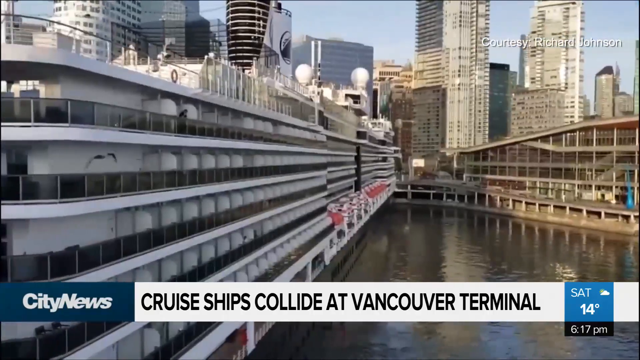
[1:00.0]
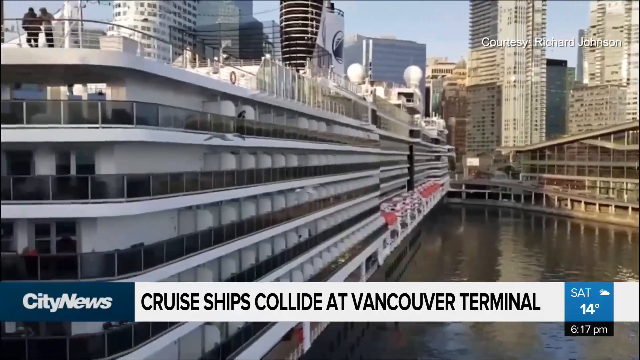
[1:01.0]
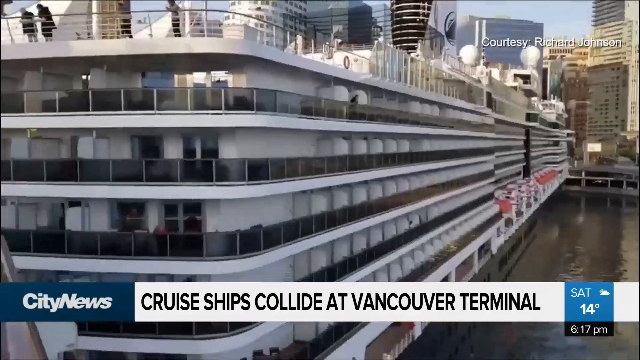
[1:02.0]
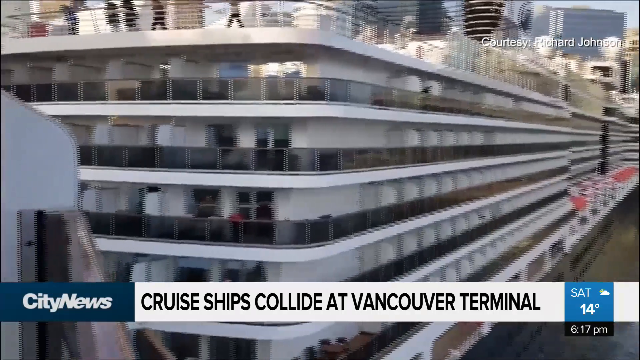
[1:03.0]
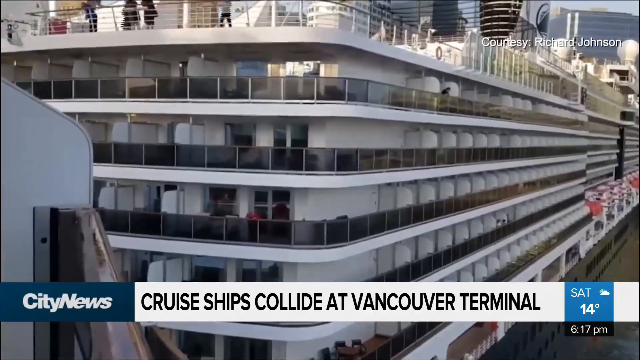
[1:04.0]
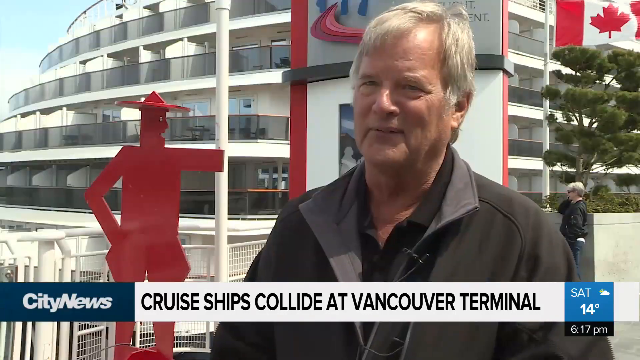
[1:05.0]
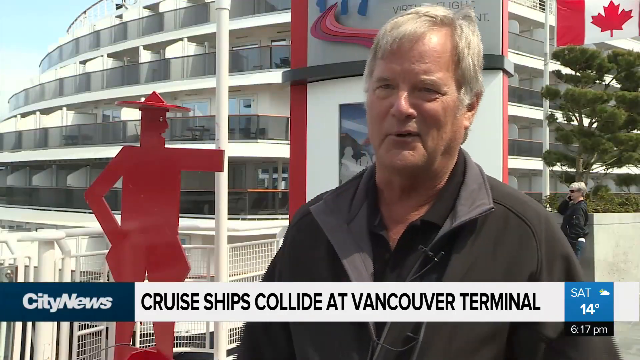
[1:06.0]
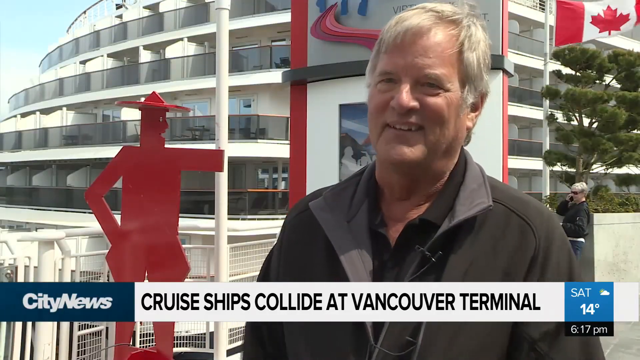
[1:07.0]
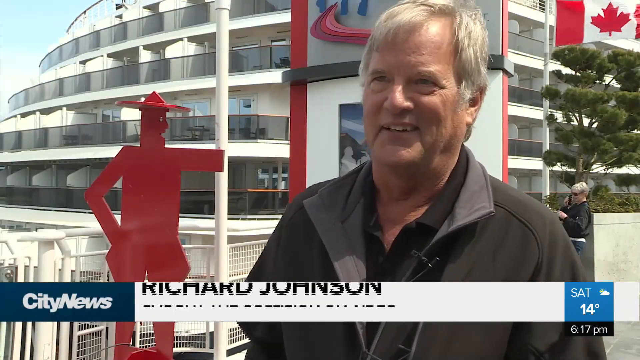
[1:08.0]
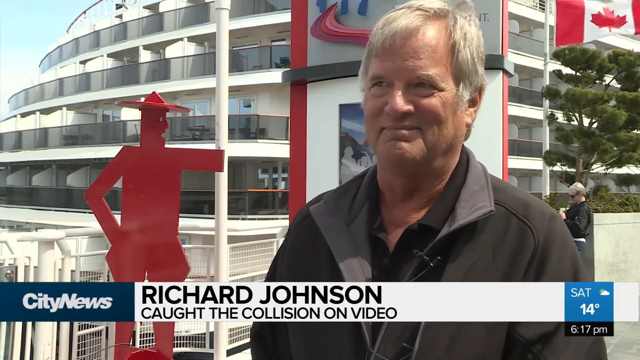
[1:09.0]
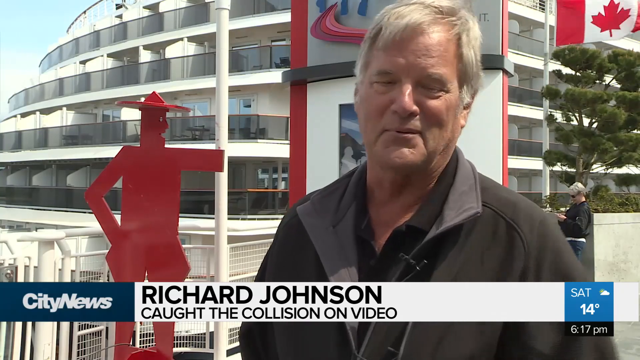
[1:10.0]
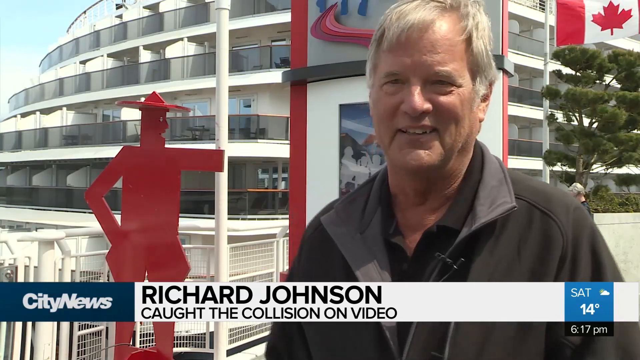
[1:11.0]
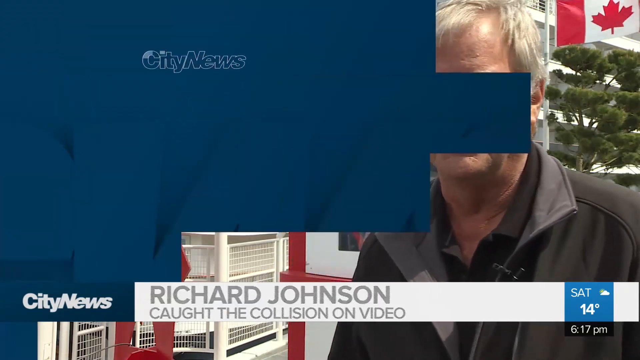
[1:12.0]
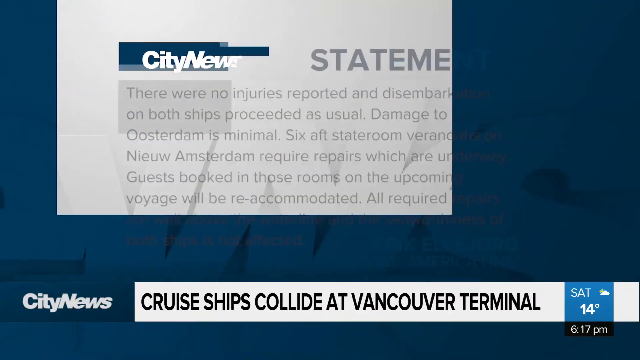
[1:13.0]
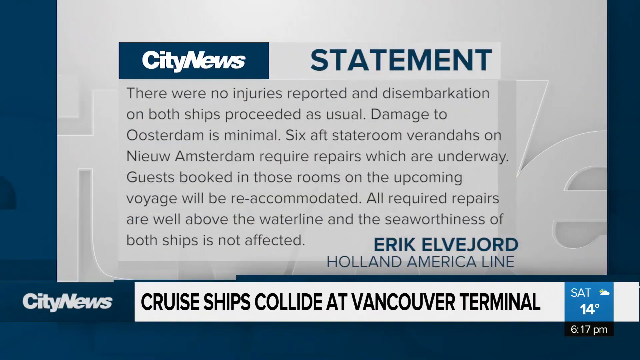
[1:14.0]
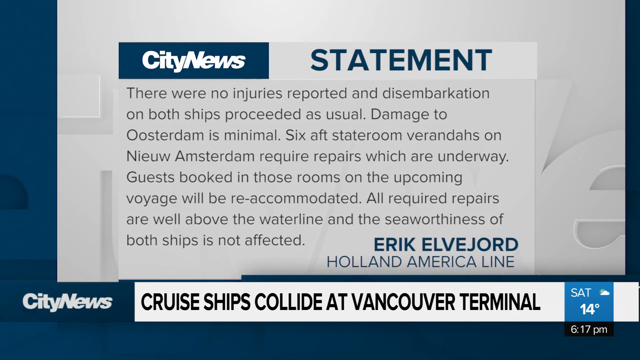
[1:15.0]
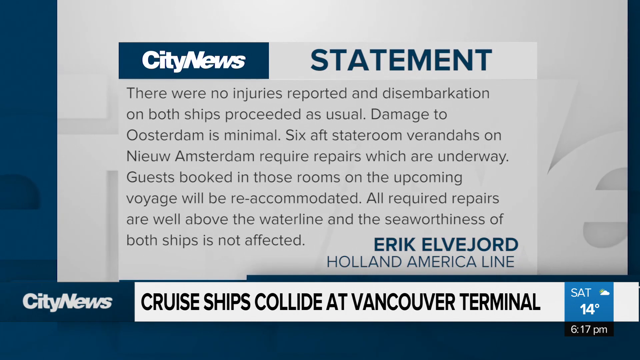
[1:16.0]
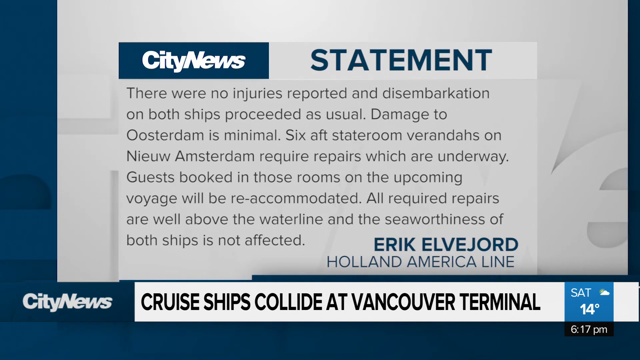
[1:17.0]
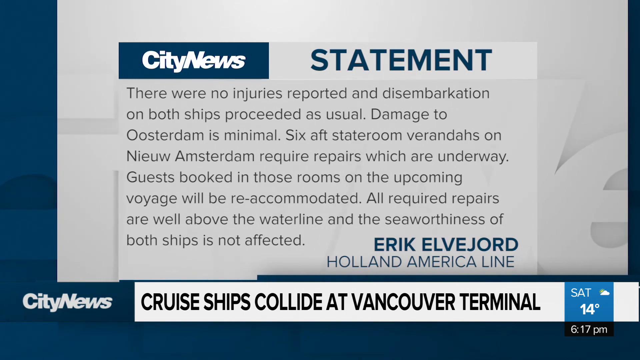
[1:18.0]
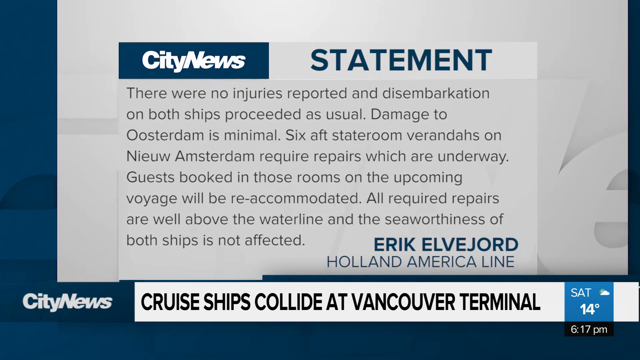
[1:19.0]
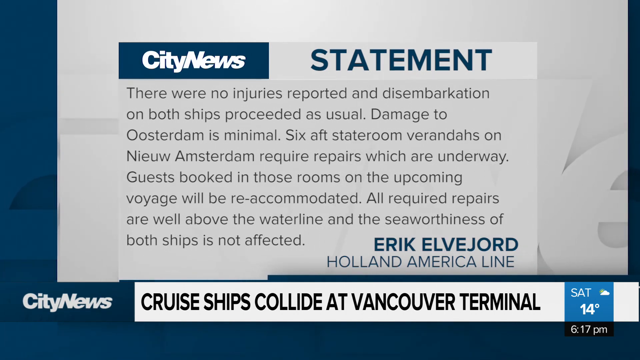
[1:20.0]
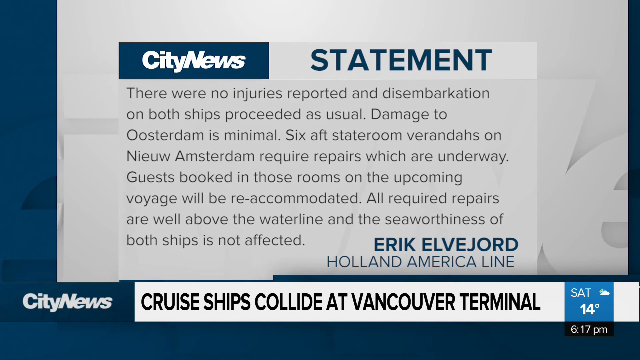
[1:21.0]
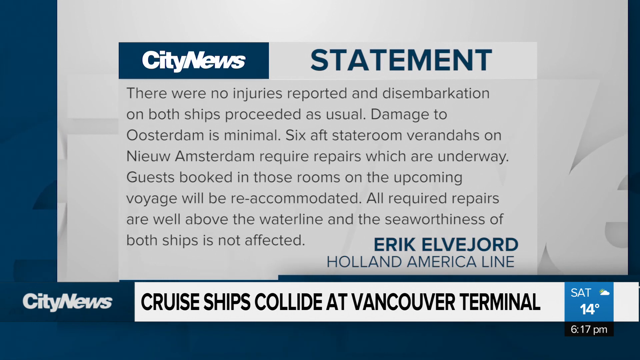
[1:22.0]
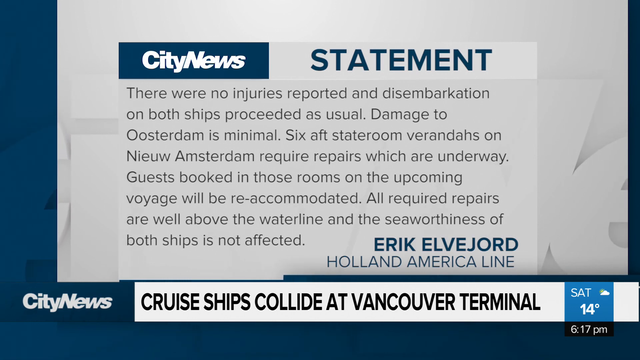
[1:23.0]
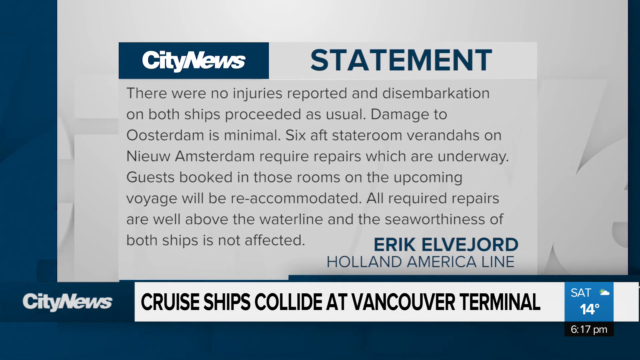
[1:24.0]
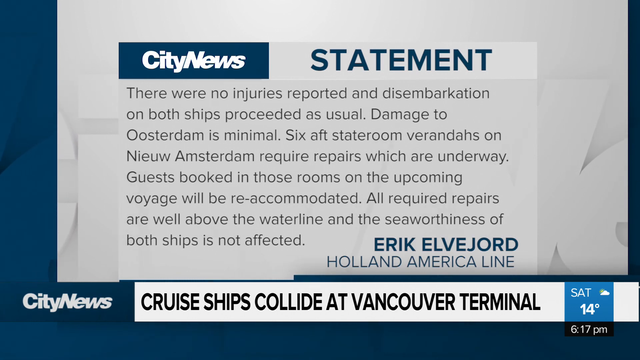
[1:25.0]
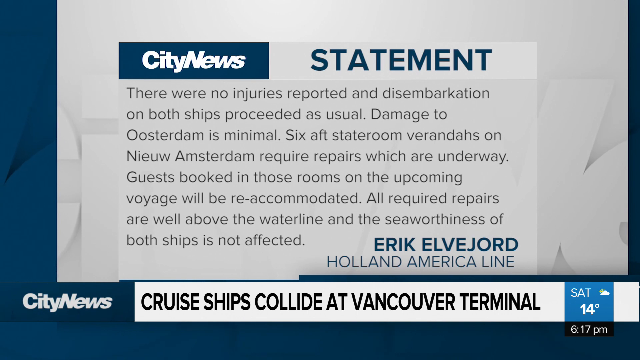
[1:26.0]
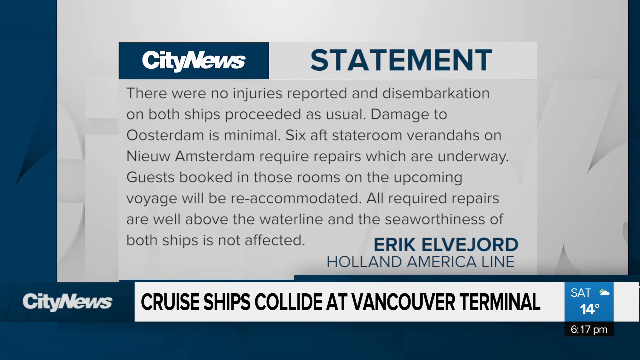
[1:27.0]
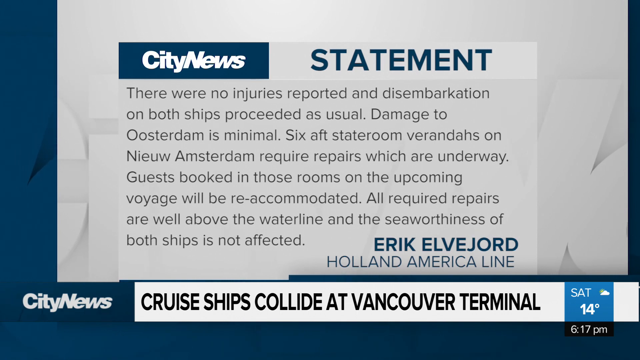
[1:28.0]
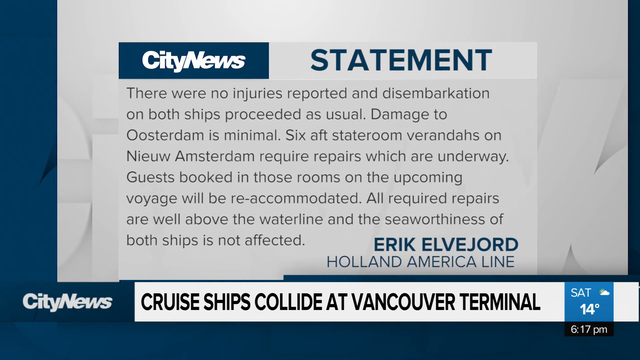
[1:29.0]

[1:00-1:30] The cruise ship slowly drifts towards the shore of Vancouver Bay on a very bright and sunny mid-afternoon, with light shining off the tall buildings of Vancouver. The ship is five stories high with observational railings on all sides, and some people on the top deck are looking back. After five seconds, the video cuts to a man who witnessed the collision: he is in his early 60s, suntanned, with long, slightly grayish hair, and wears a black polo shirt with a black jacket over it. He stands on the dock describing the events, with a banner beneath him reading "Cruise ships collide at Vancouver Terminal". After two seconds, a second banner appears under him reading "Richard Johnson caught the collision on video". A Canadian flag waves behind him. After five seconds, the video cuts to a written statement across the screen headed "City News Statement", reading: "There were no injuries reported and disembarkation on both ships proceeded as usual. Damage to Oosterdam is minimal. Six aft stateroom verandas on New Amsterdam require repairs which are underway. Guests booked in those rooms on the upcoming voyage will be re-accommodated. All required repairs are well above the waterline, and the seaworthiness of both ships is not affected." The quote is attributed to Eric Elgeard of the Holland American Line, and the same banner, "Cruise ships collide at Vancouver Terminal", is beneath it.